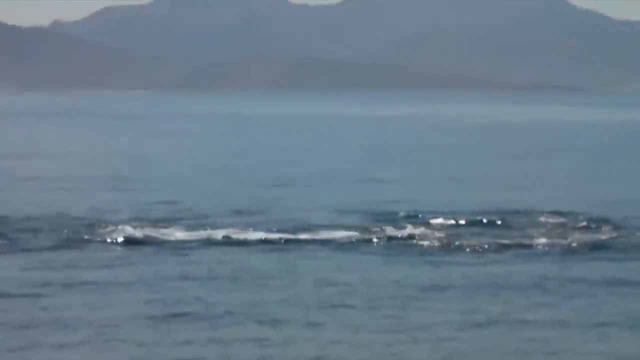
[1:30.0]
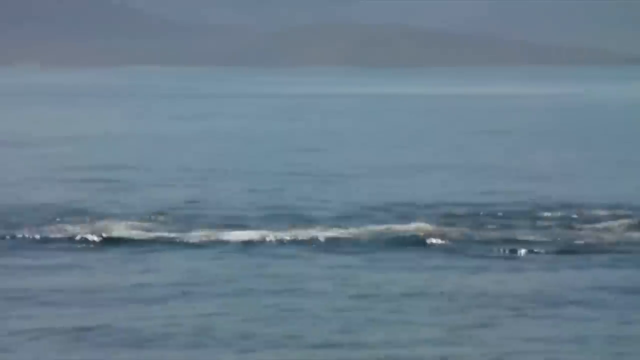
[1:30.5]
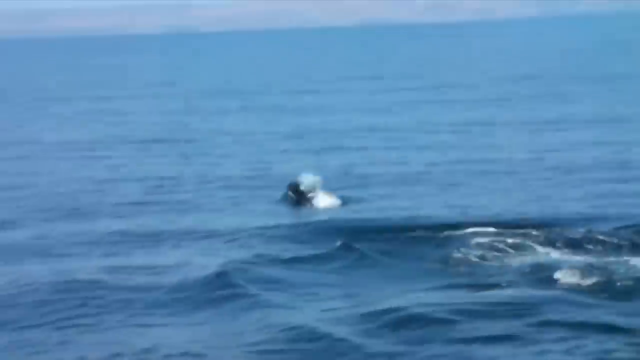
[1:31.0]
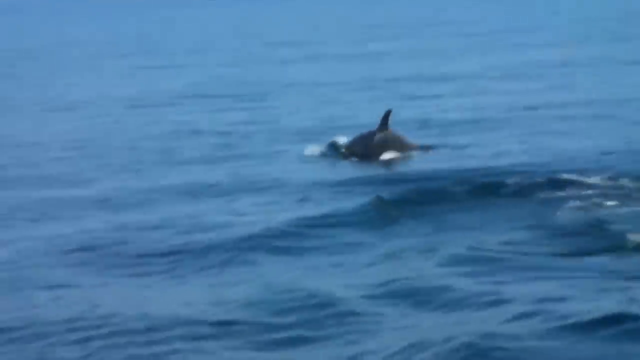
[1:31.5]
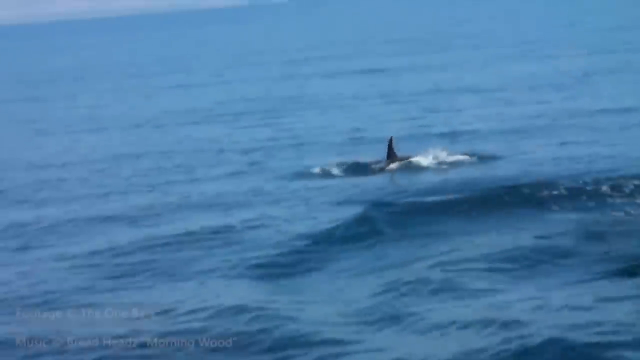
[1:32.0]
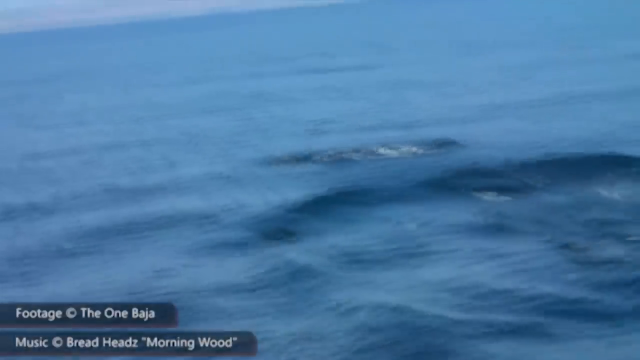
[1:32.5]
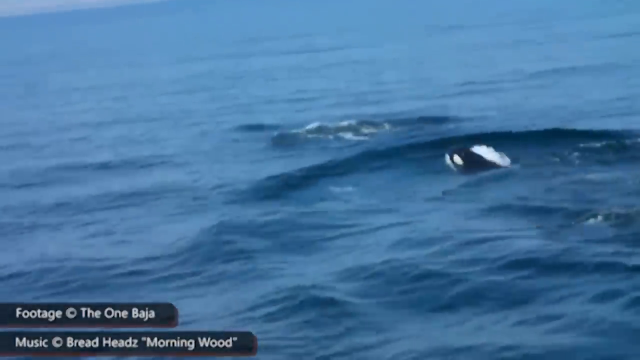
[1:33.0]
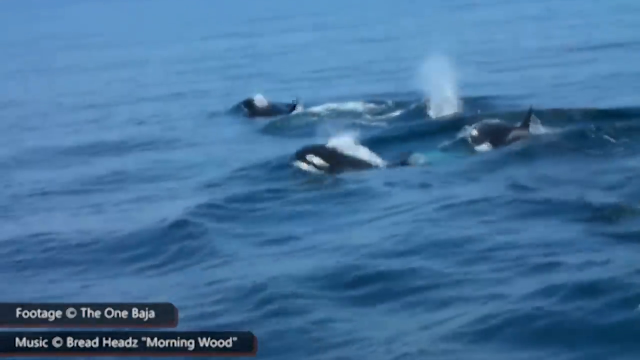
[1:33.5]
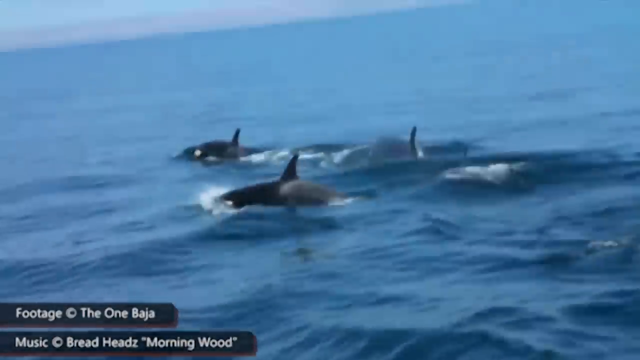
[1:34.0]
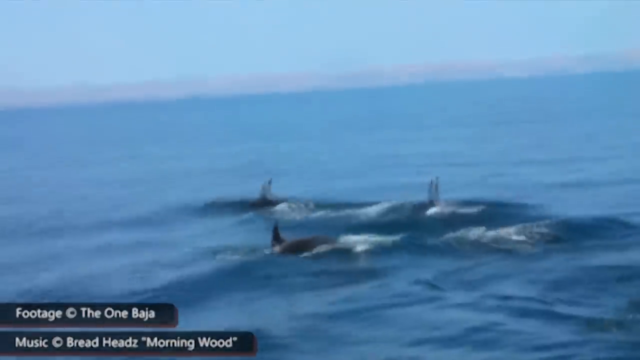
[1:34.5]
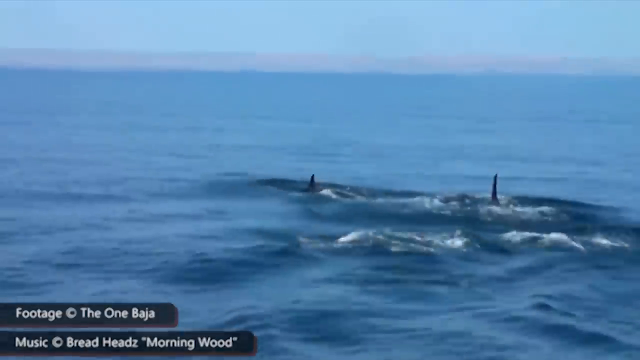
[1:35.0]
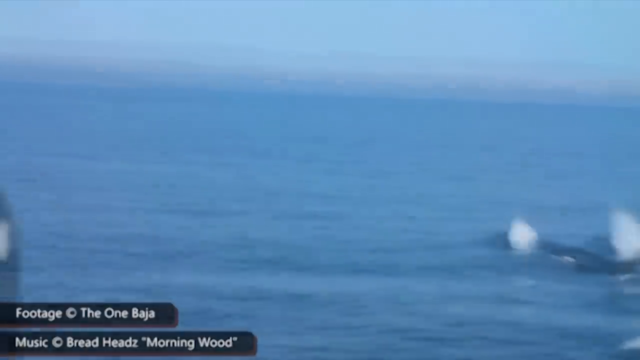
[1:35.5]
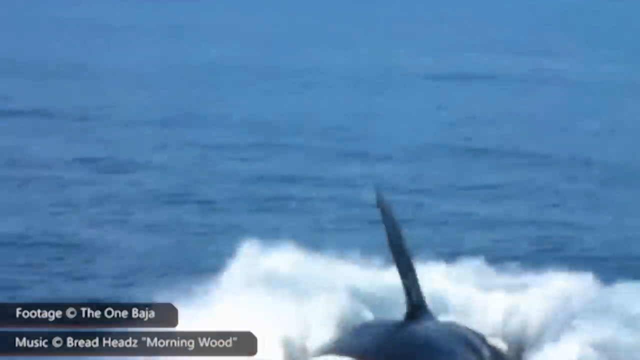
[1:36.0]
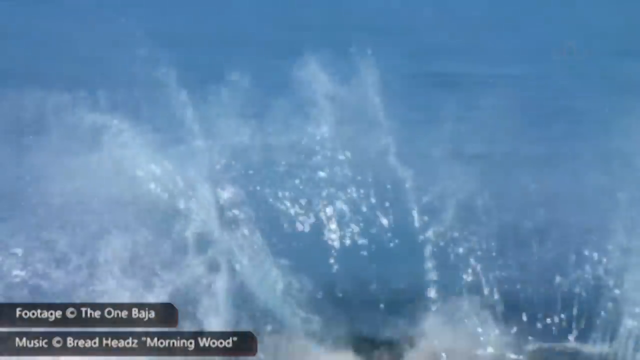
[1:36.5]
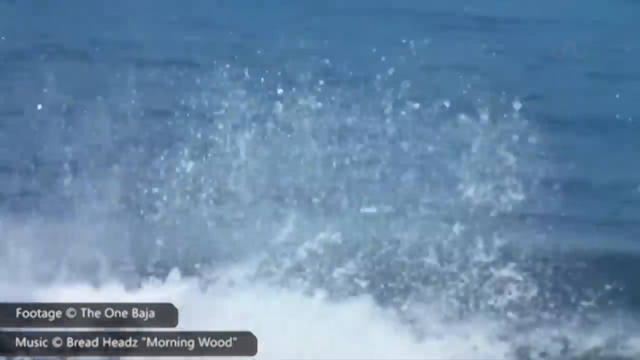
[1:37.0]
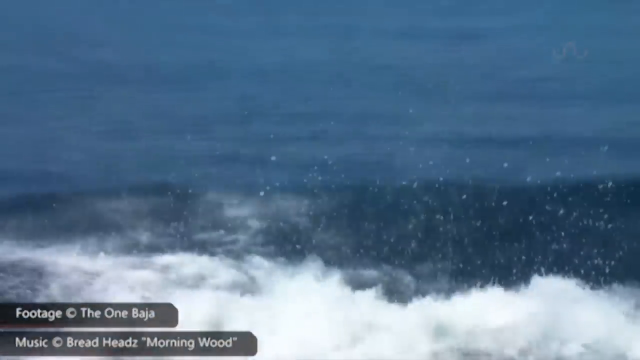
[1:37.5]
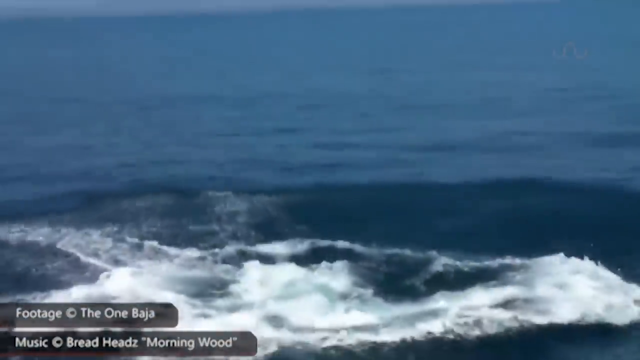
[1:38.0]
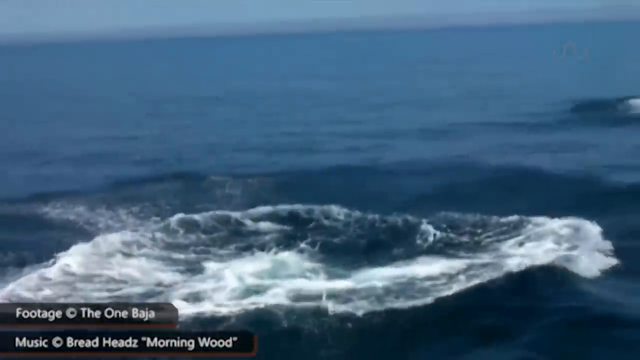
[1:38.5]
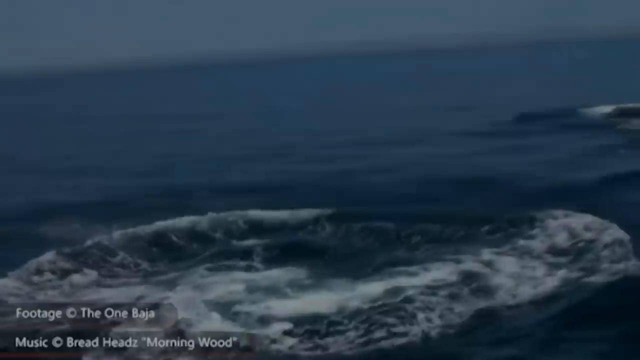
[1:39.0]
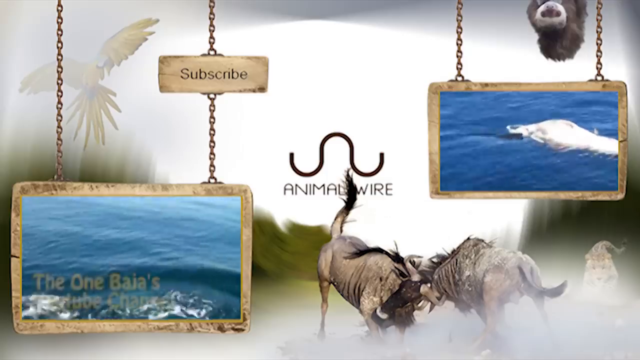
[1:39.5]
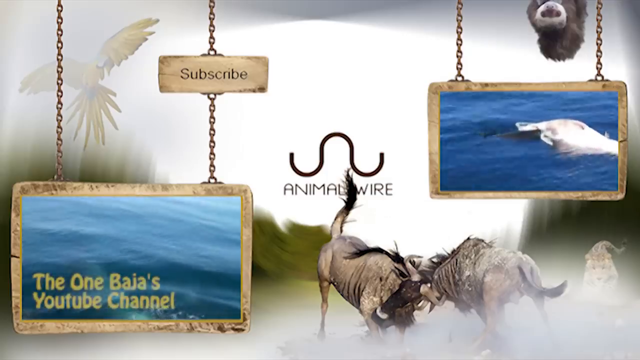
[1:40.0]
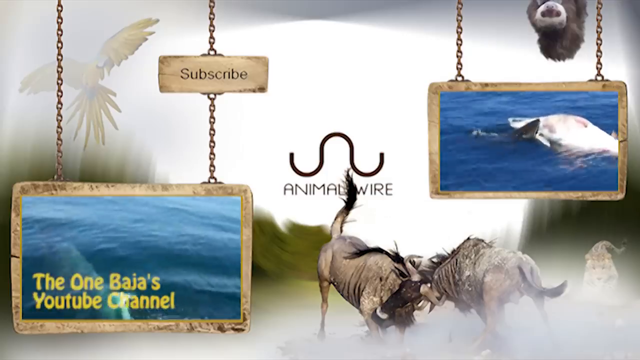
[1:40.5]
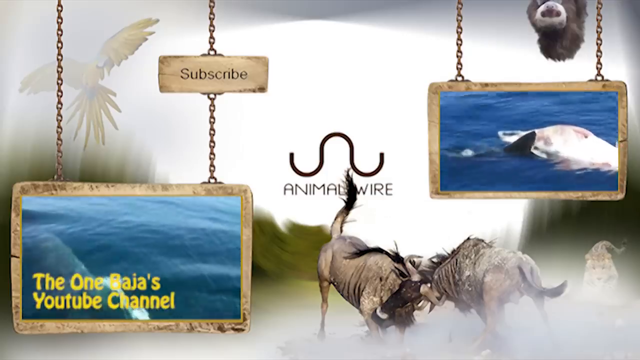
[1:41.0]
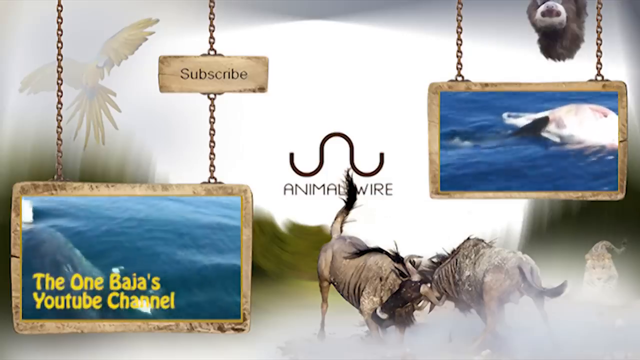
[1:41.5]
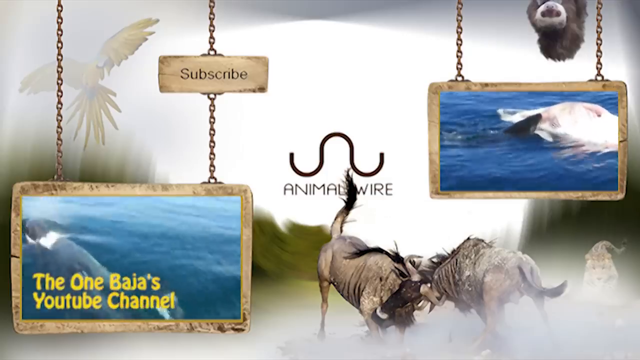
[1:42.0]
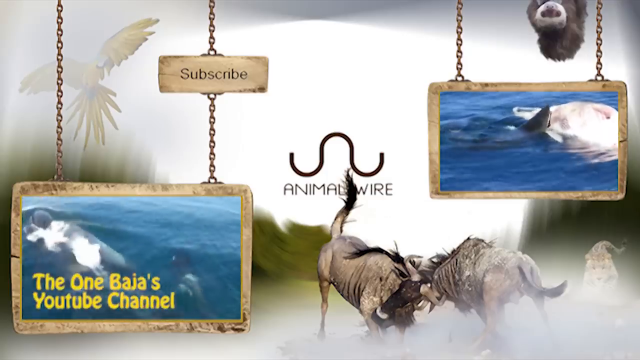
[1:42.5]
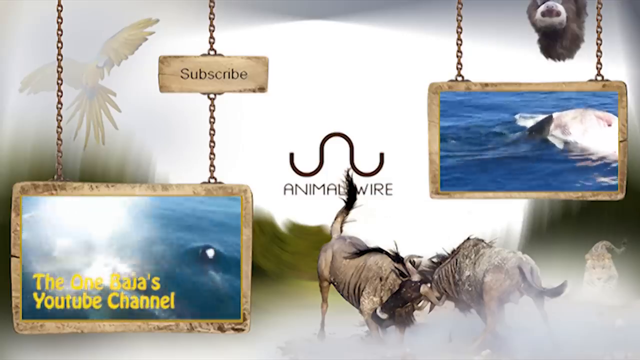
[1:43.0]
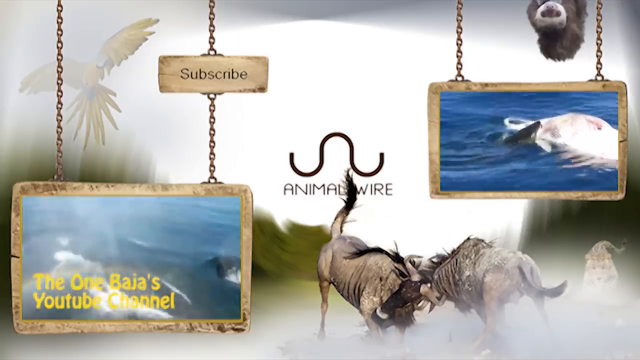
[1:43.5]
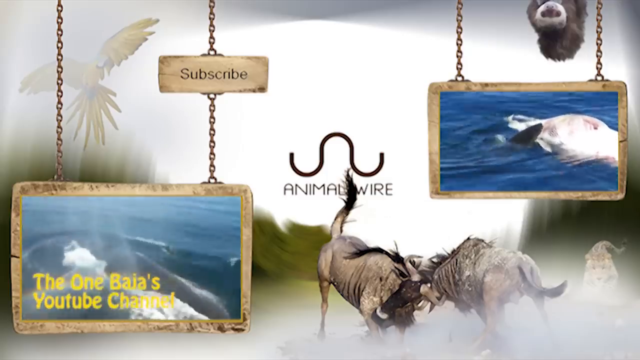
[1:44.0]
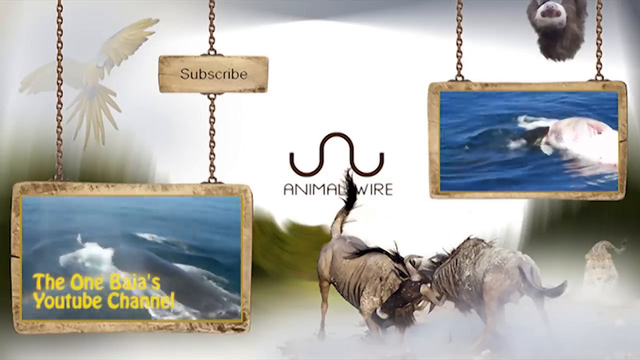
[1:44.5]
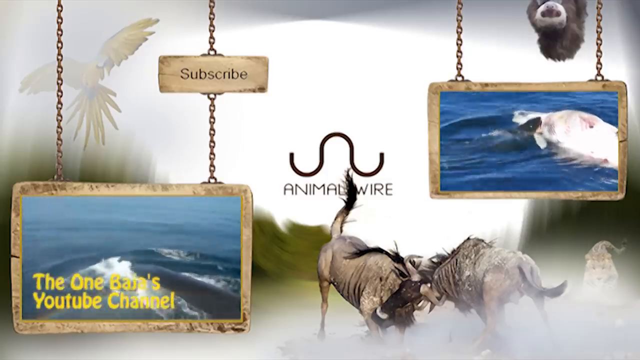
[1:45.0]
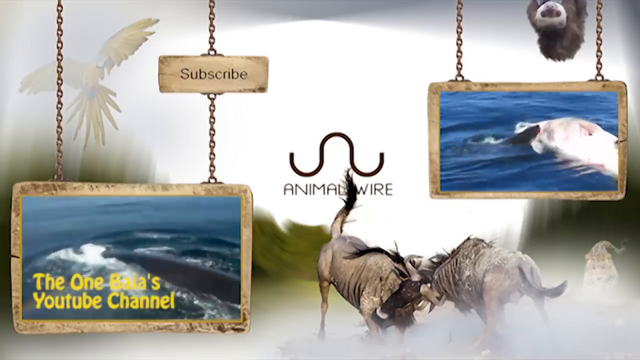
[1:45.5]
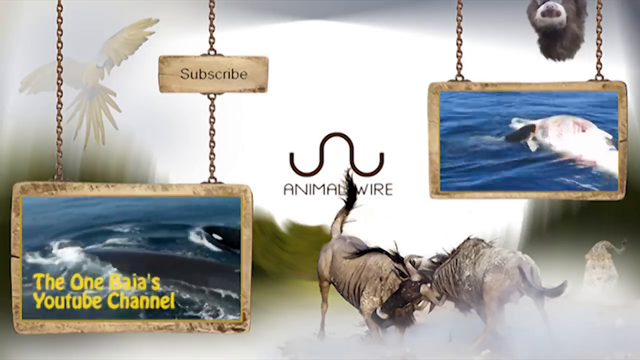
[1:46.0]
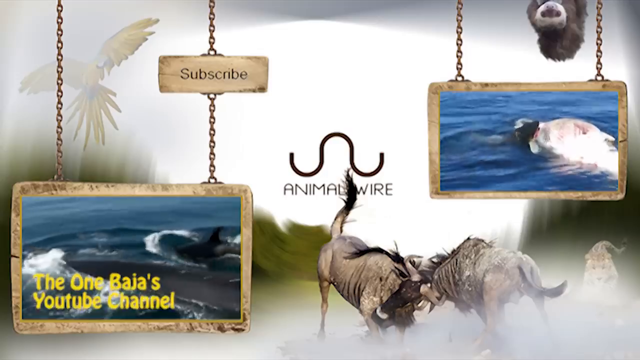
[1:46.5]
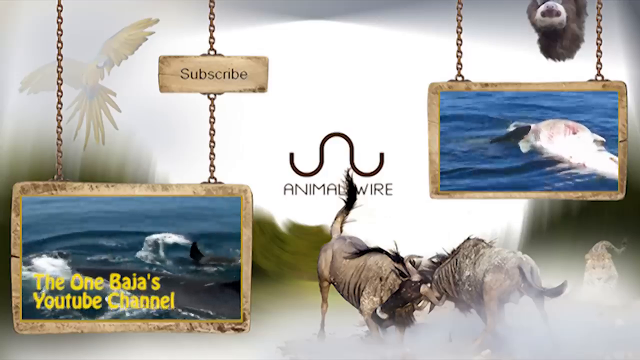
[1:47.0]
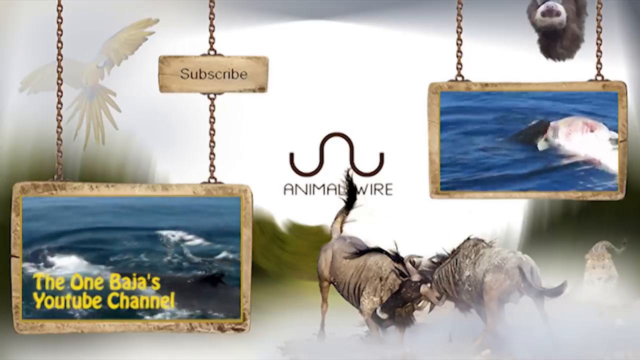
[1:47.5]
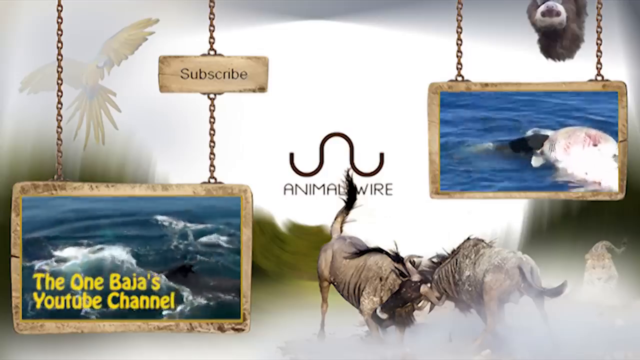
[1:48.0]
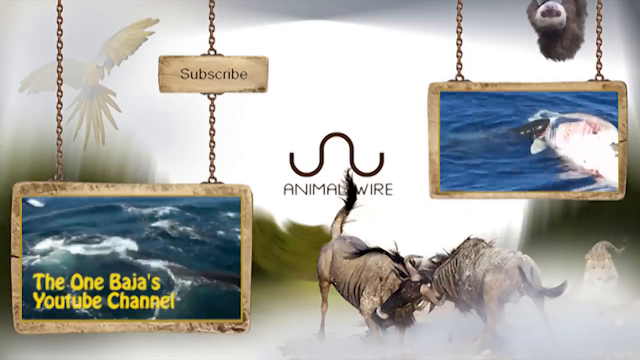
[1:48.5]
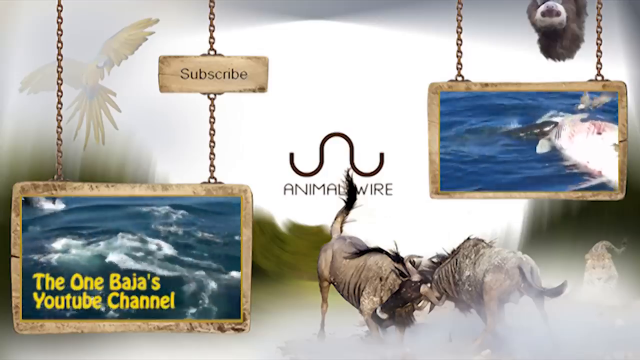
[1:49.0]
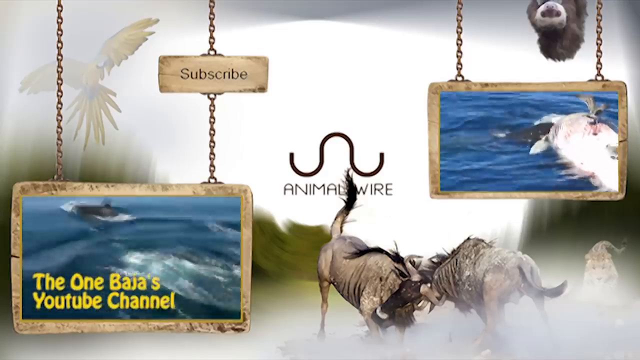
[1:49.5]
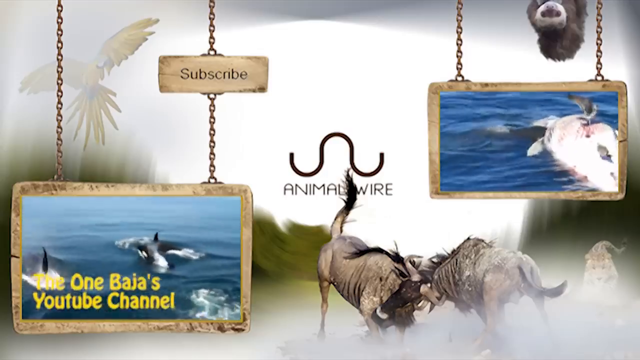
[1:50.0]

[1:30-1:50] An orca off the bow of a boat breaches the surface and disappears below. As it does, four more orcas come up in a diamond-shaped formation, breaching the surface at the same time before disappearing below. The camera quickly pans to the left-hand side, where another orca erupts out of the surface, launches itself into the air, slightly turns onto its side and comes crashing back down. Then two signs project onto the screen, one from the left and one from the right, hung on gold chains. Inside each rectangular sign is a video graphic. The one on the bottom left says "The One Baja's YouTube channel" over a background of an ocean scene of whales. The sign on the right shows a shark eating an animal carcass. Behind all of this is a faded picture of two wildebeests fighting and locking horns.